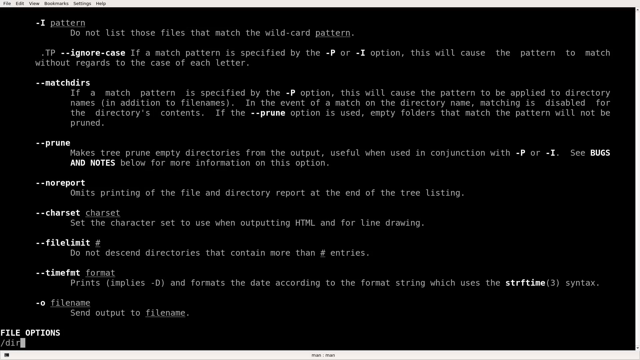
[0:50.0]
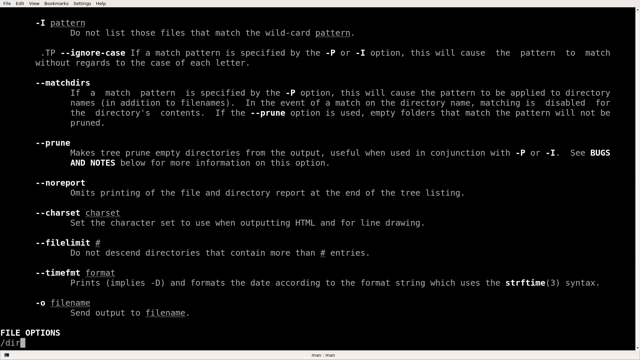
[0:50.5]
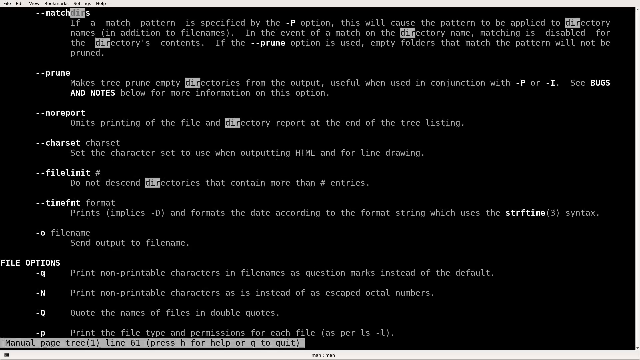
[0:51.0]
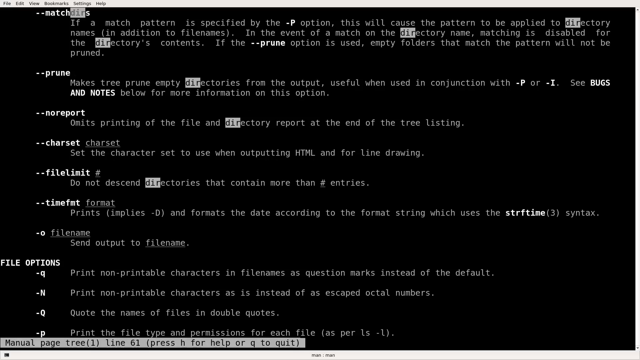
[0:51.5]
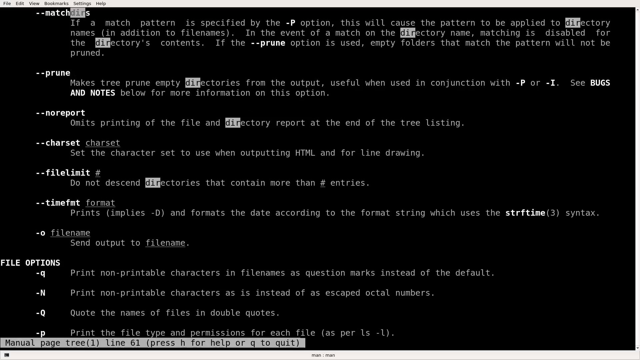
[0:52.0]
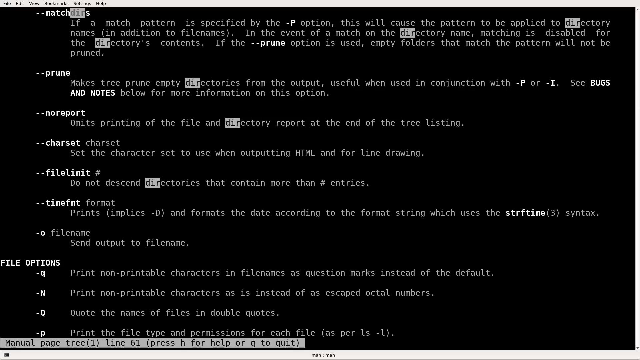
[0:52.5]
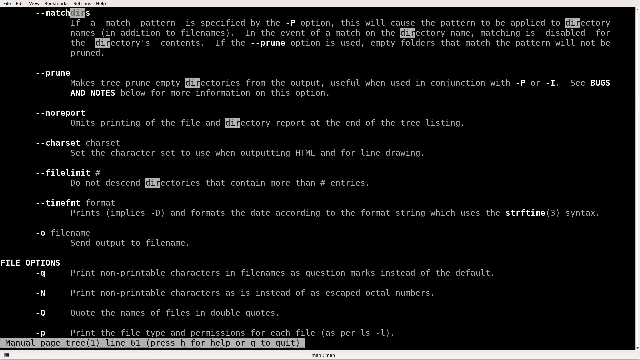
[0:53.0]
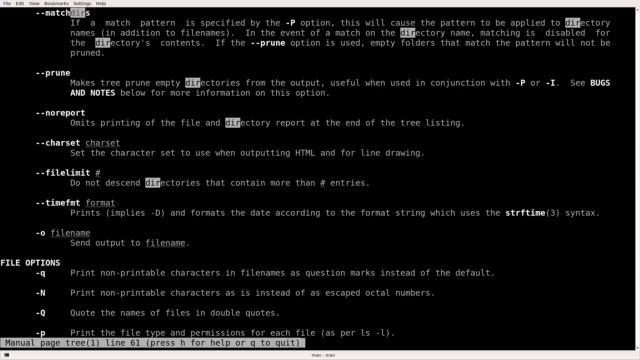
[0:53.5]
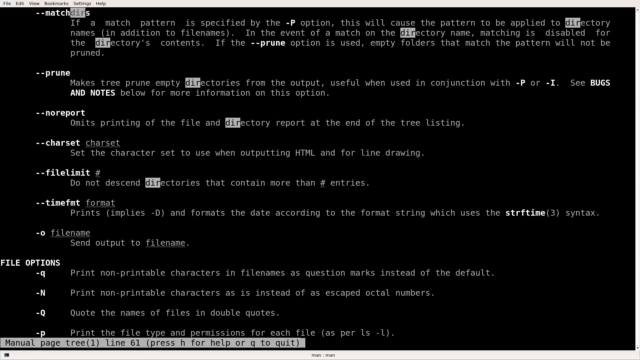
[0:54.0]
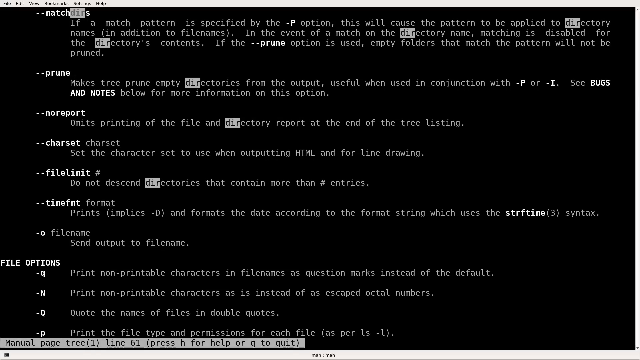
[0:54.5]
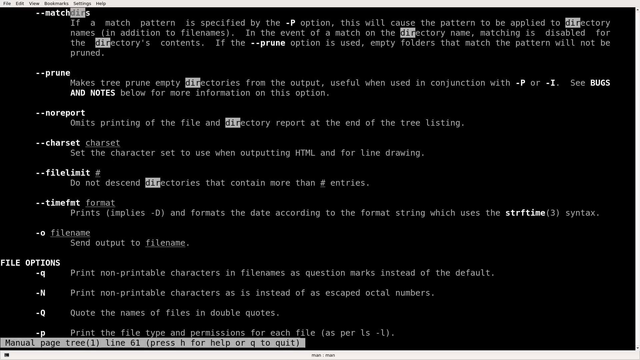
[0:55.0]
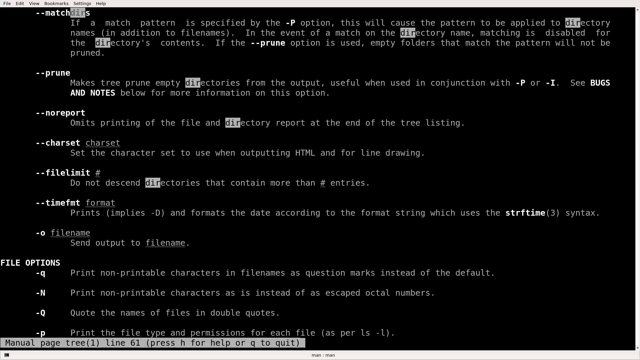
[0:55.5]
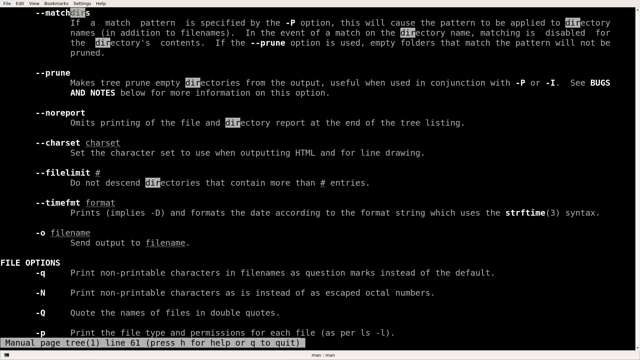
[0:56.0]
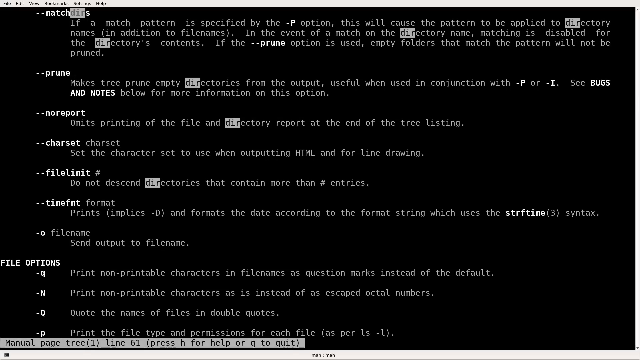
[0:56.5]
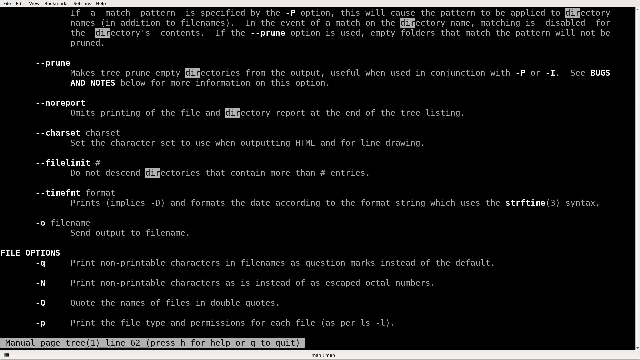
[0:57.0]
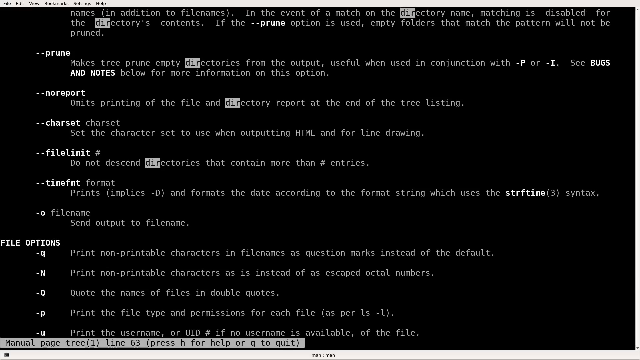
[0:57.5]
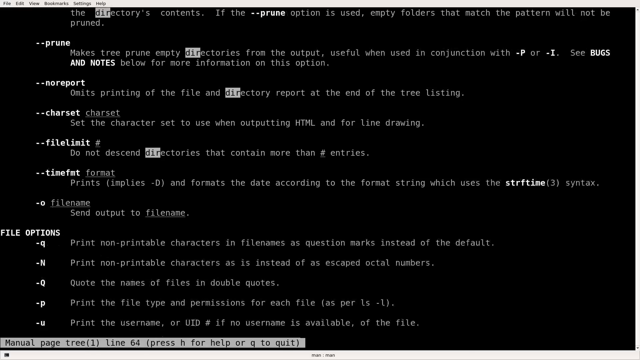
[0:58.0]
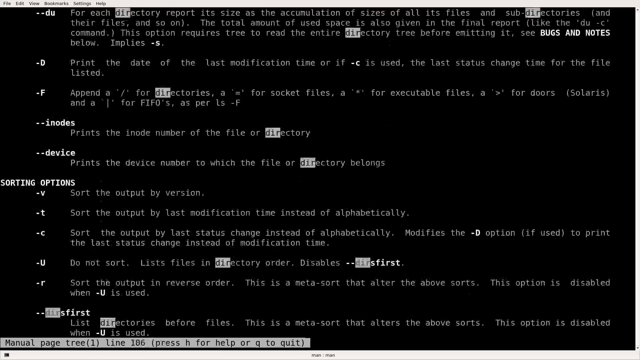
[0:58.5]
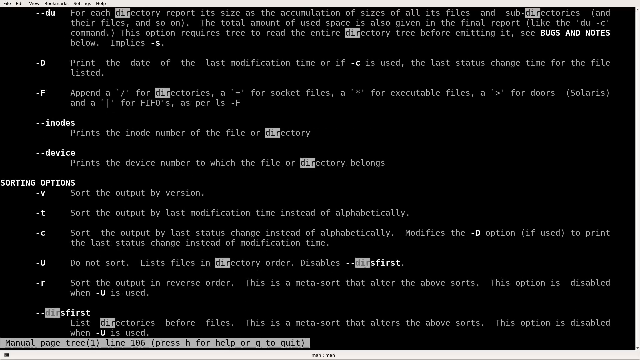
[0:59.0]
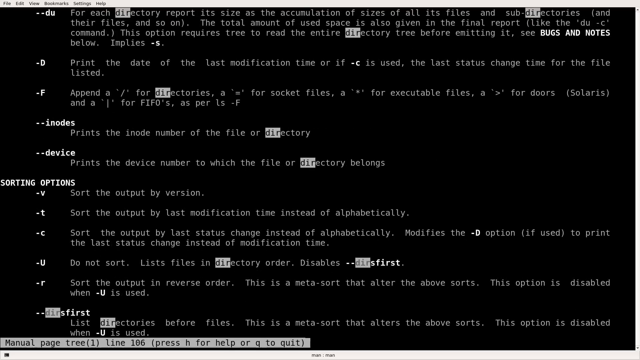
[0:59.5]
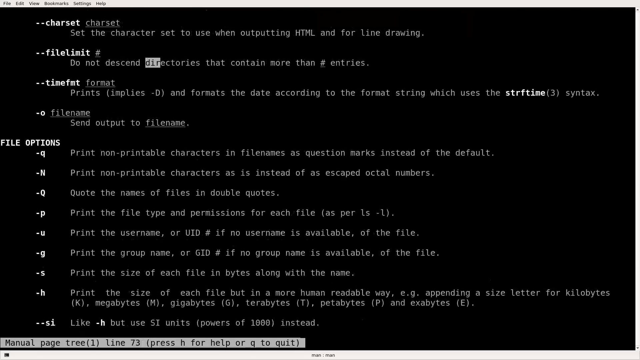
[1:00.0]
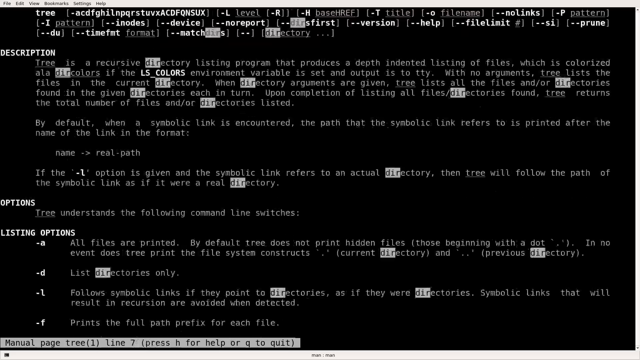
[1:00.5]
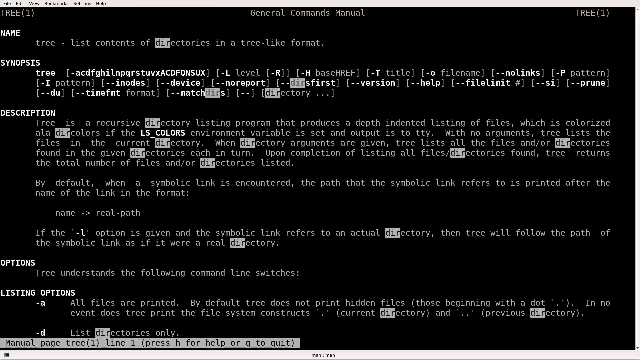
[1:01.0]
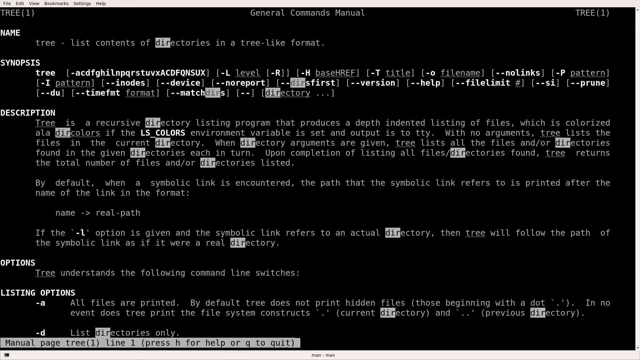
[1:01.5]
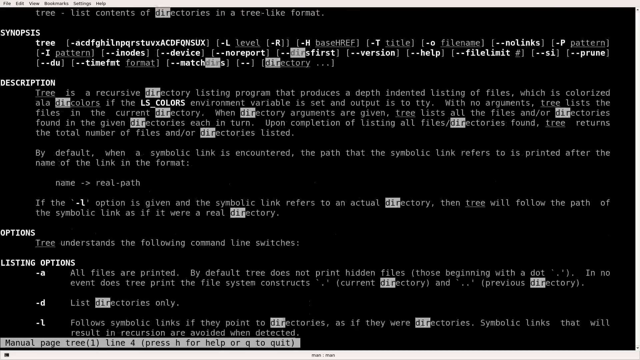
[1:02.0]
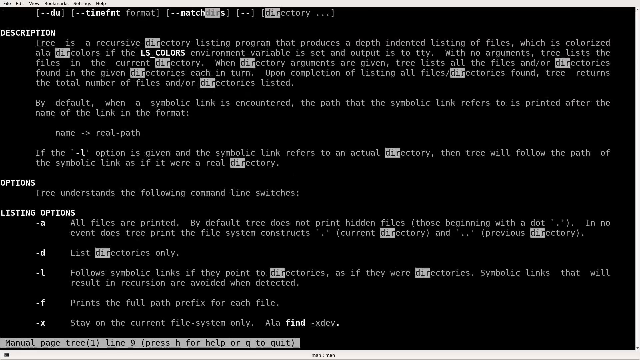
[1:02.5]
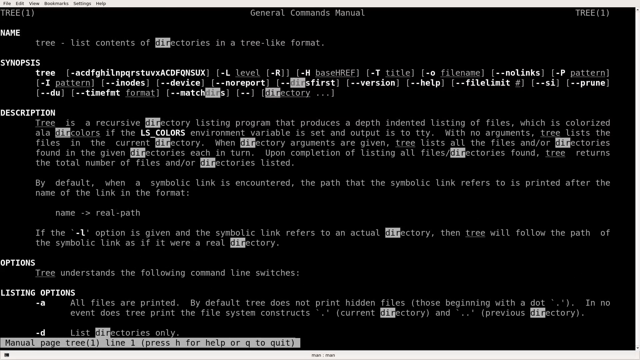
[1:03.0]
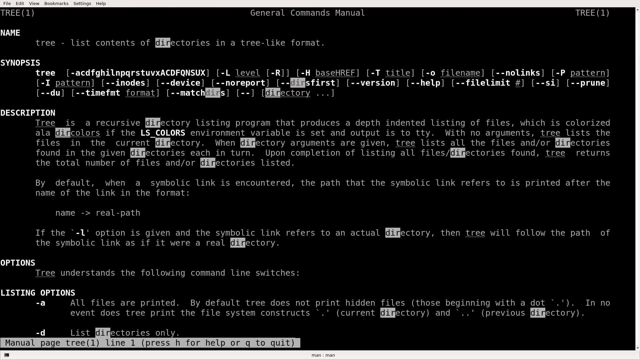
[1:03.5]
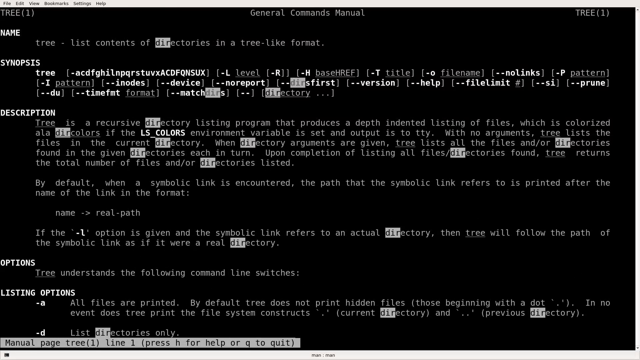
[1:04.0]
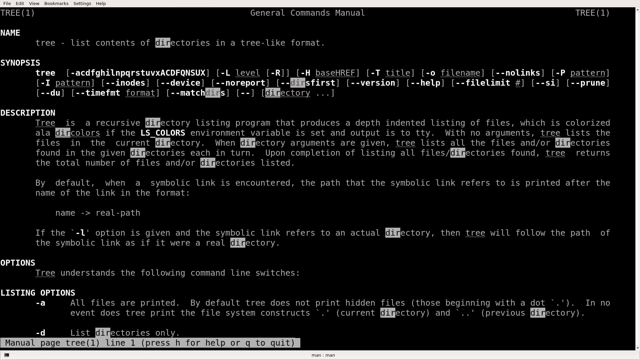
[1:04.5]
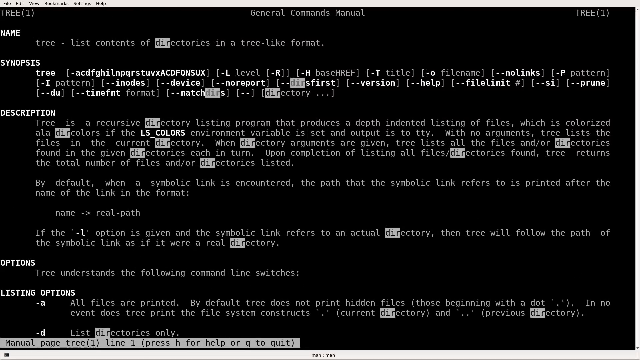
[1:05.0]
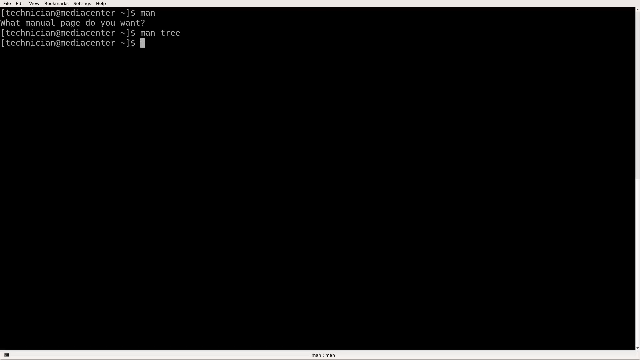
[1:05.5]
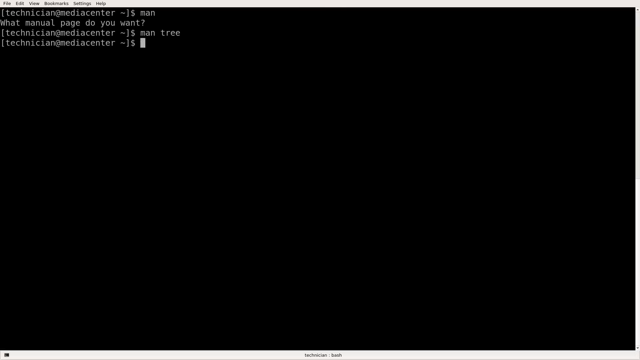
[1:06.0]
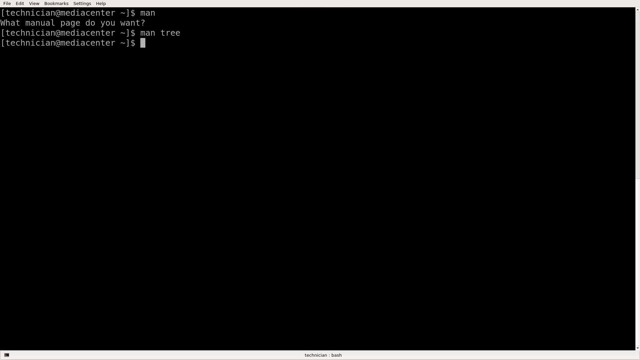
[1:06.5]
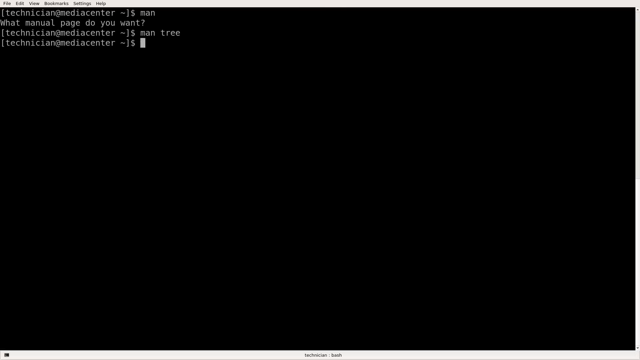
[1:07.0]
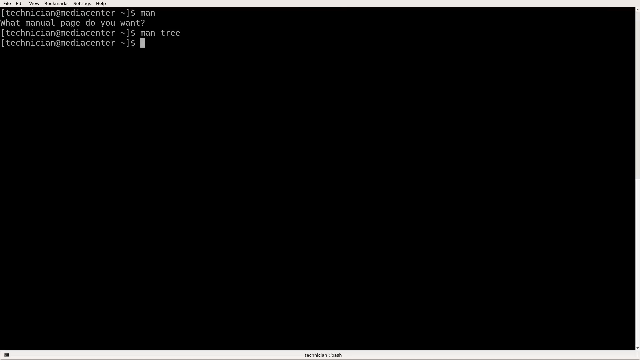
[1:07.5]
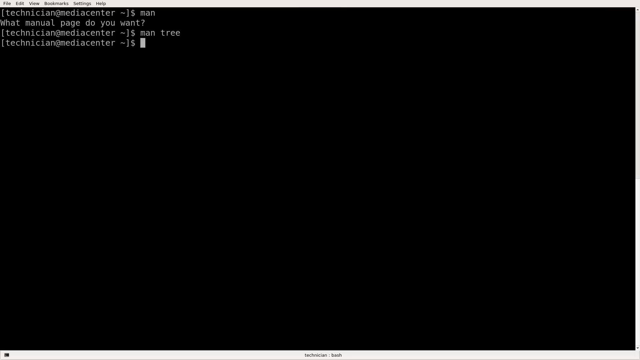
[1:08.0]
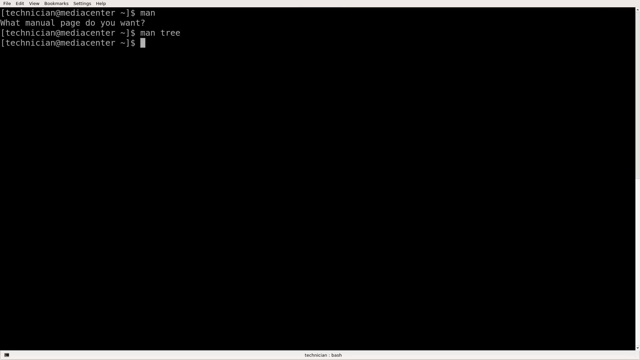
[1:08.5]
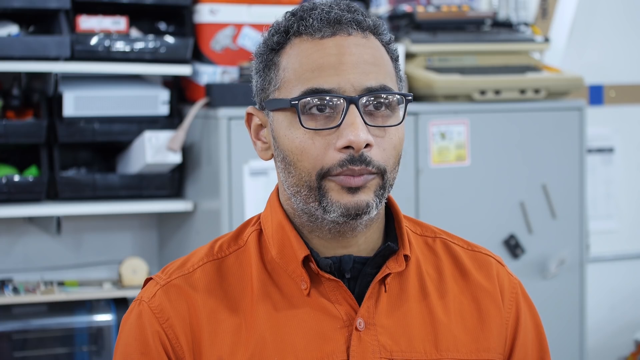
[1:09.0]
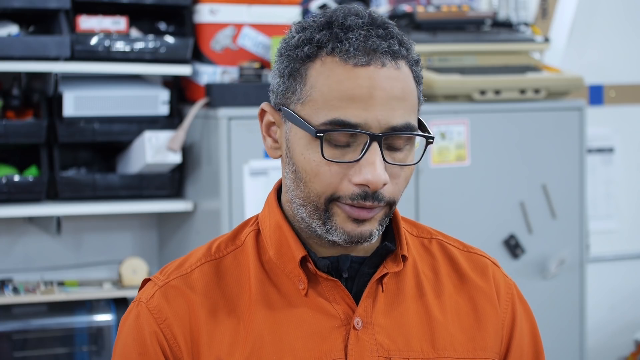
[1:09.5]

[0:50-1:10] The command section of what appears to be the Linux workstation shows a list of commands. It scrolls down a little and "file options" appears, and the letters "dir" in "directories" are highlighted, apparently from a search. The user scrolls without much apparent direction. Under "file options" are single letters on the left-hand side that seem to be categories. "Manual page tree" appears at the bottom, seemingly clicked, and the view goes to another page. The person is shown briefly as he looks up, then the view returns to the page reading "manual page tree line 61." The view moves back and forth between the person's face and the screen as he talks.